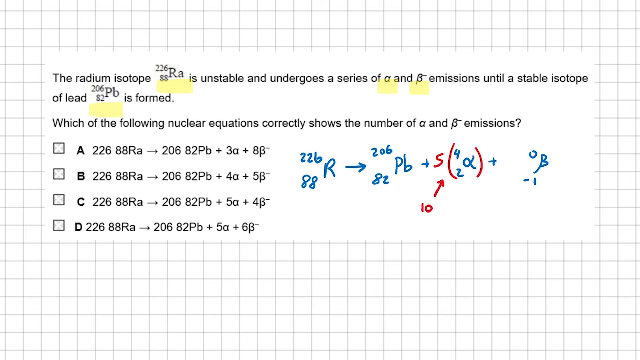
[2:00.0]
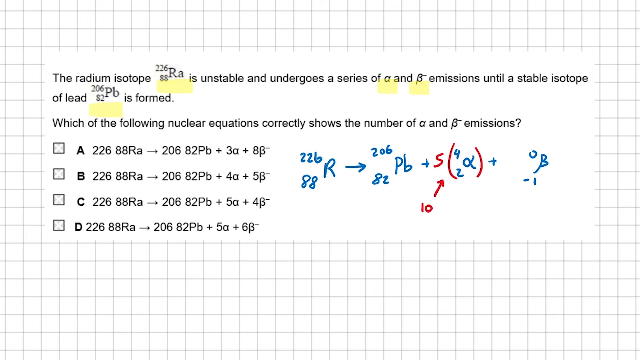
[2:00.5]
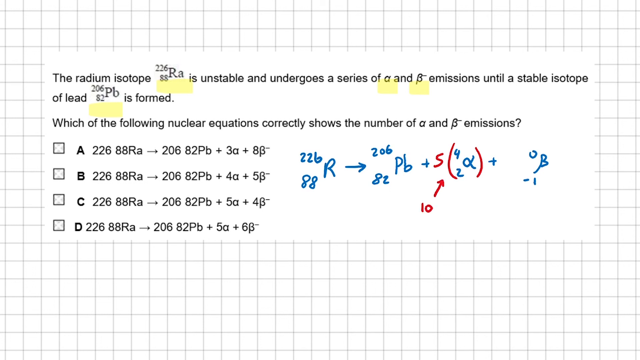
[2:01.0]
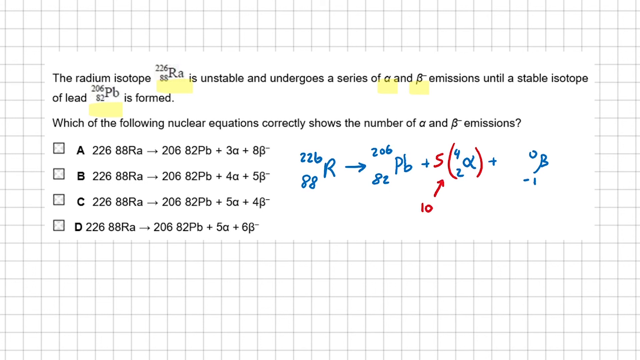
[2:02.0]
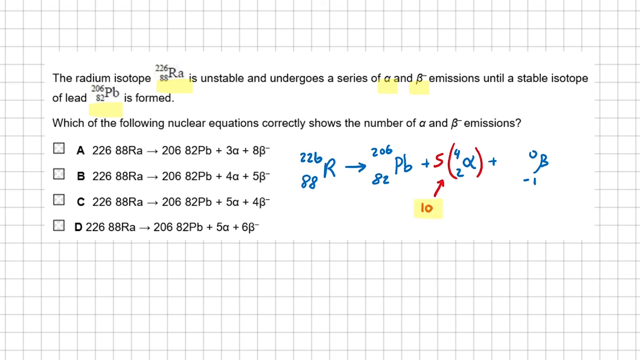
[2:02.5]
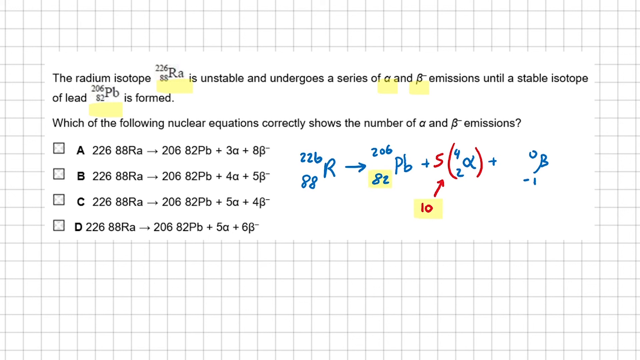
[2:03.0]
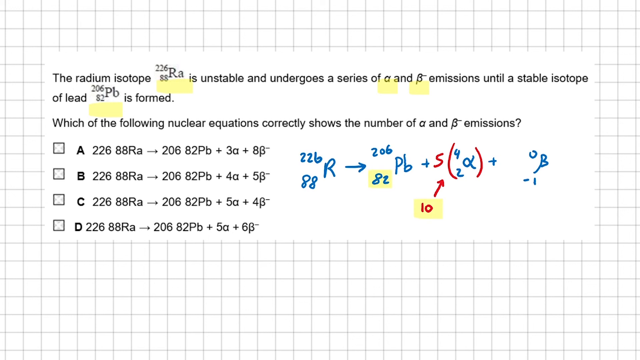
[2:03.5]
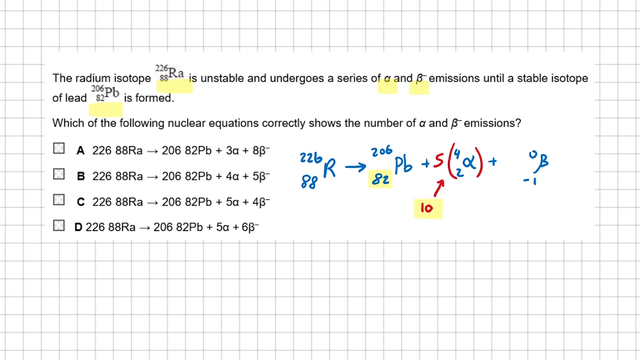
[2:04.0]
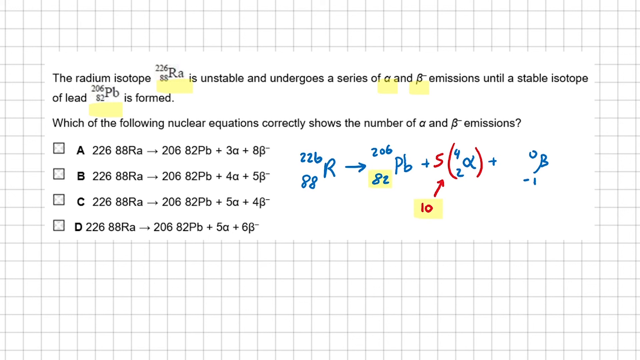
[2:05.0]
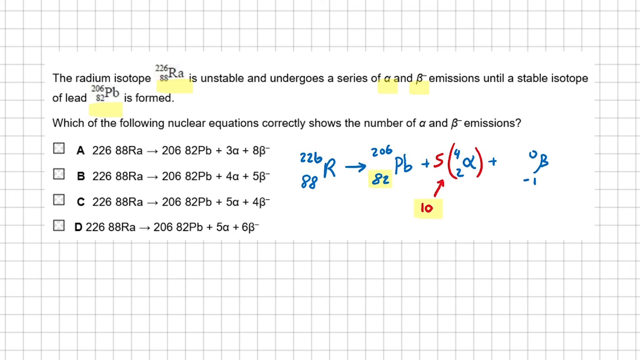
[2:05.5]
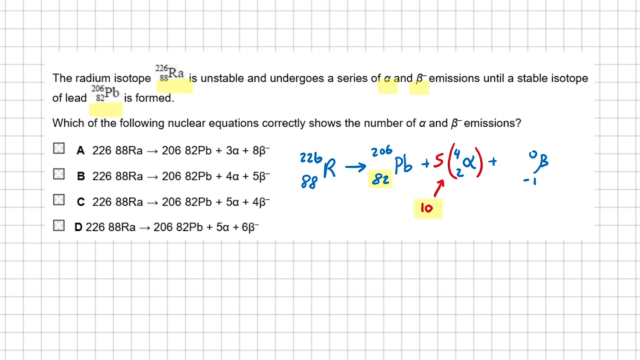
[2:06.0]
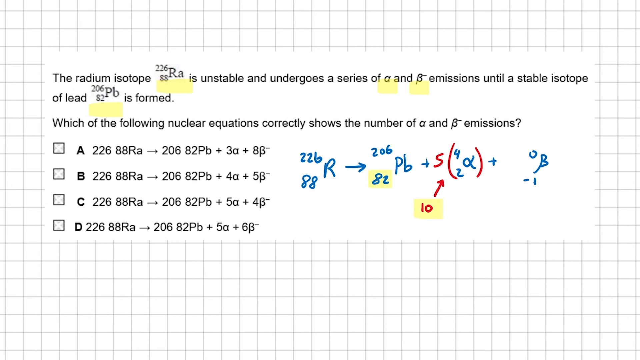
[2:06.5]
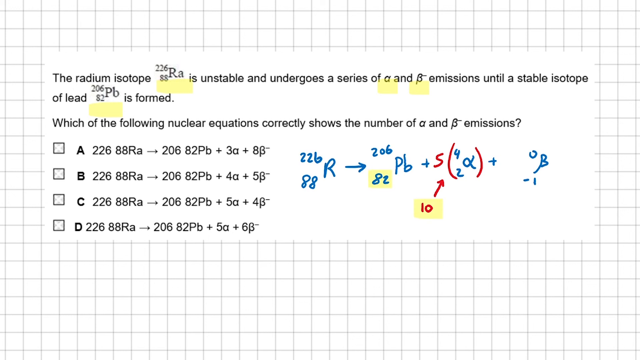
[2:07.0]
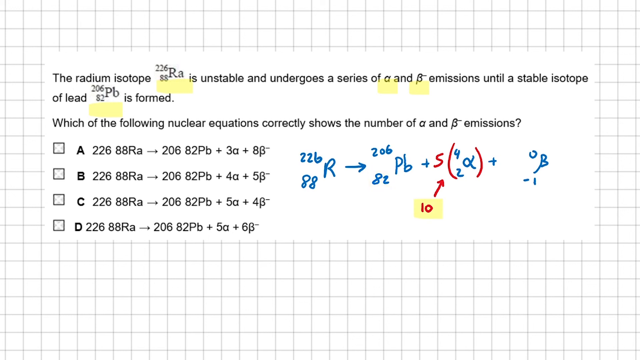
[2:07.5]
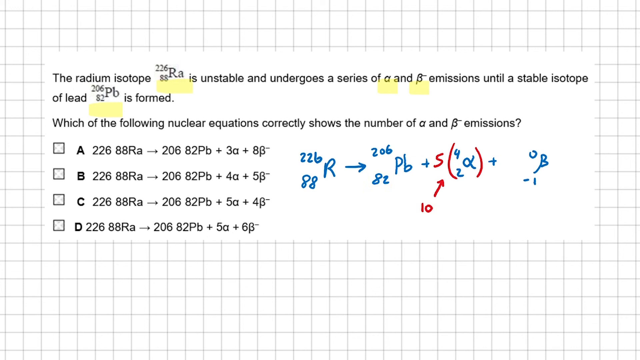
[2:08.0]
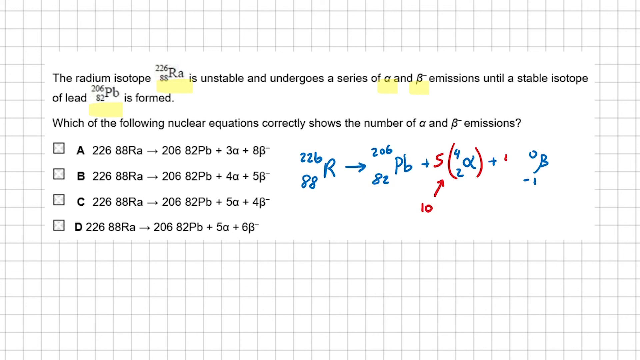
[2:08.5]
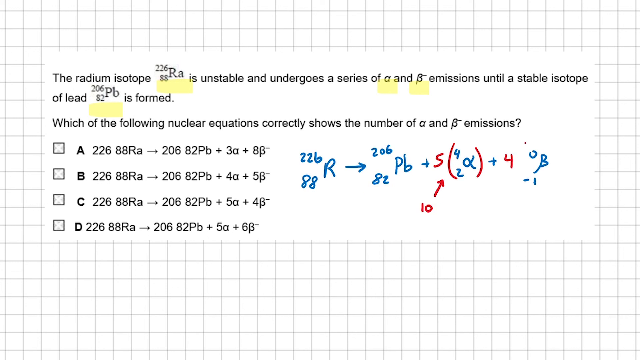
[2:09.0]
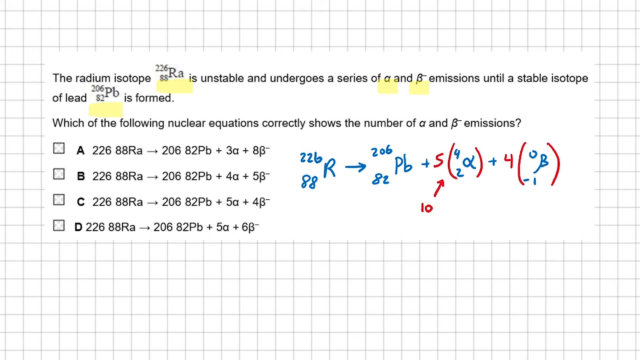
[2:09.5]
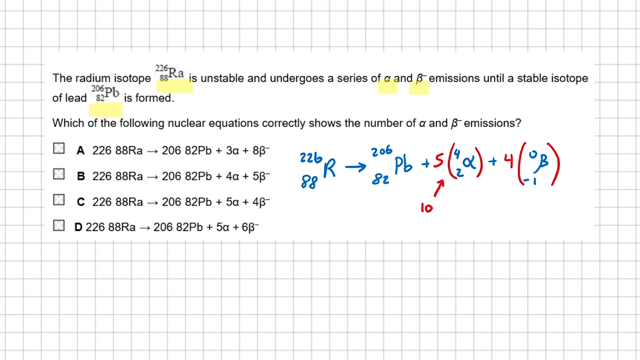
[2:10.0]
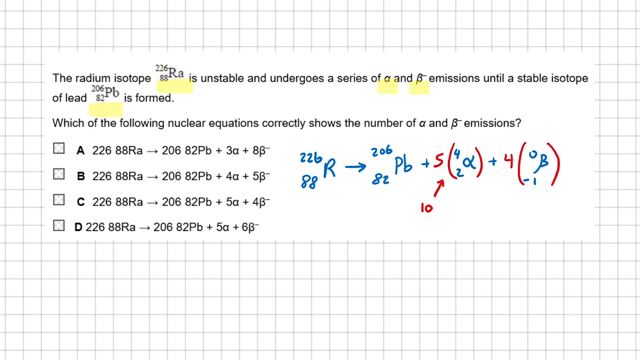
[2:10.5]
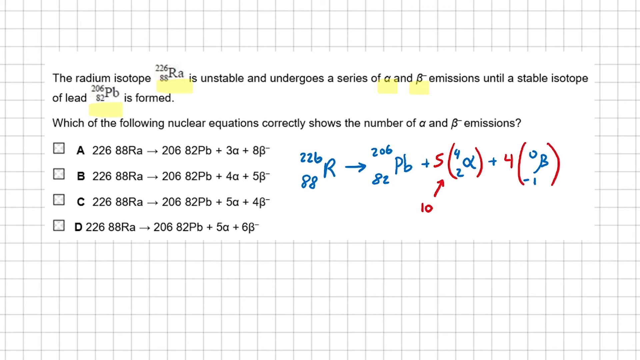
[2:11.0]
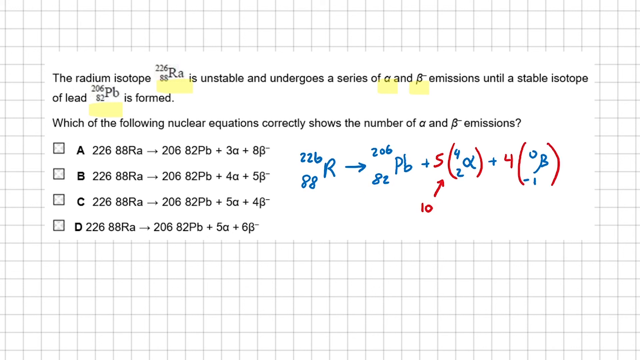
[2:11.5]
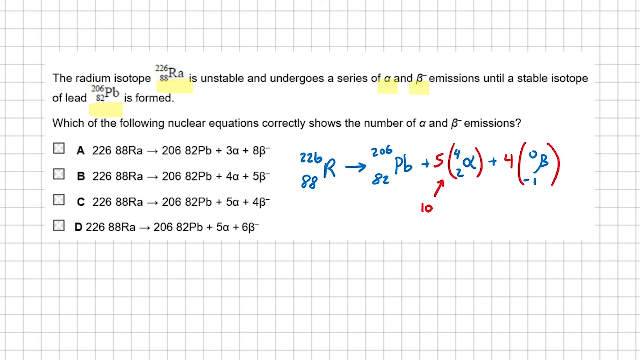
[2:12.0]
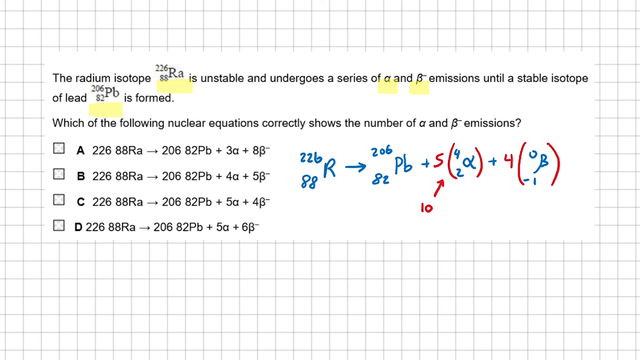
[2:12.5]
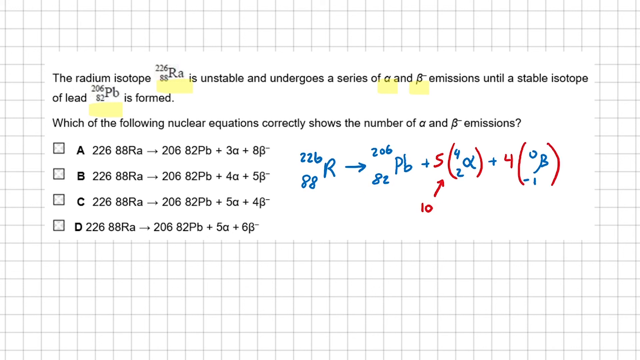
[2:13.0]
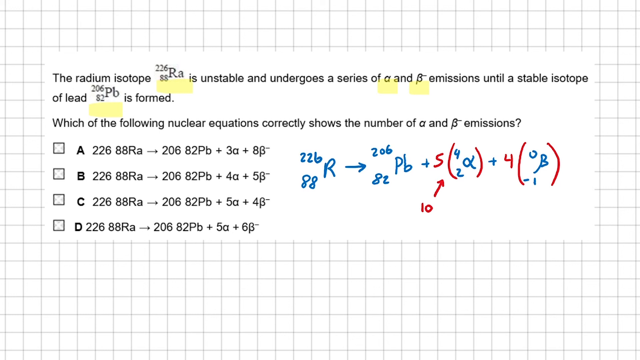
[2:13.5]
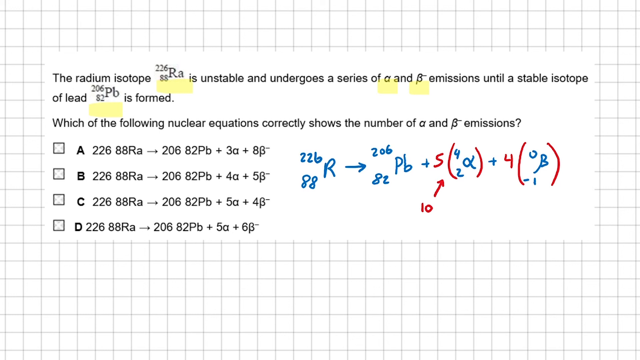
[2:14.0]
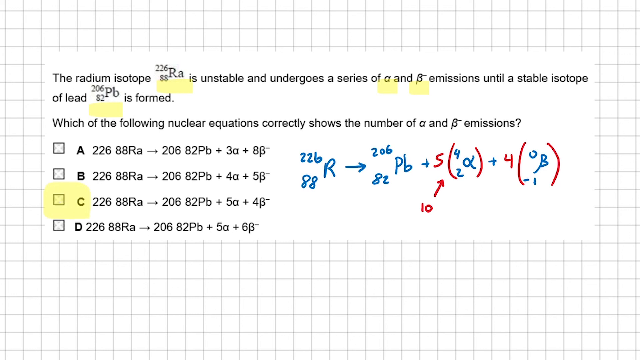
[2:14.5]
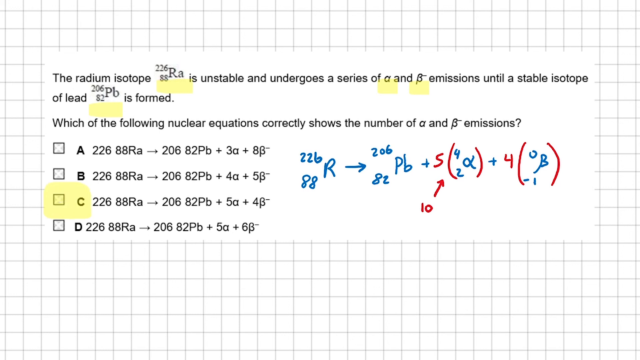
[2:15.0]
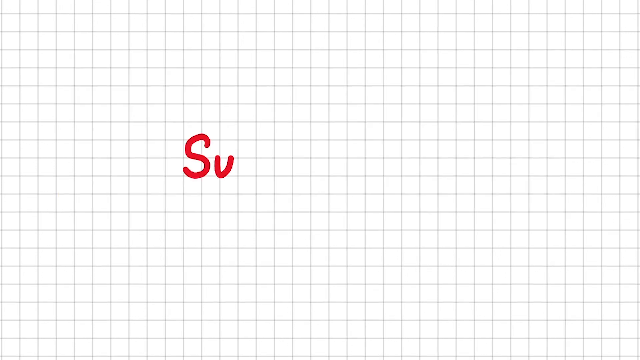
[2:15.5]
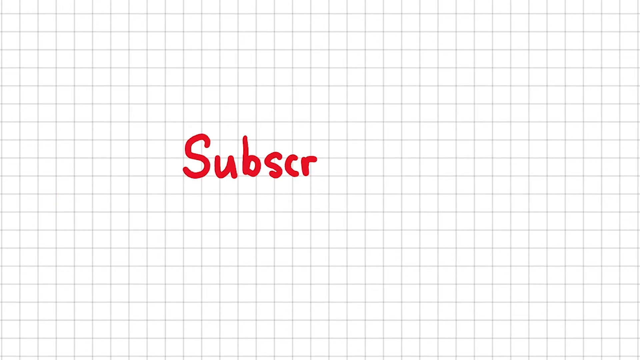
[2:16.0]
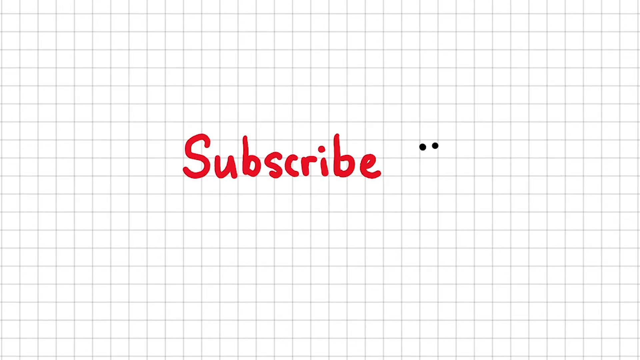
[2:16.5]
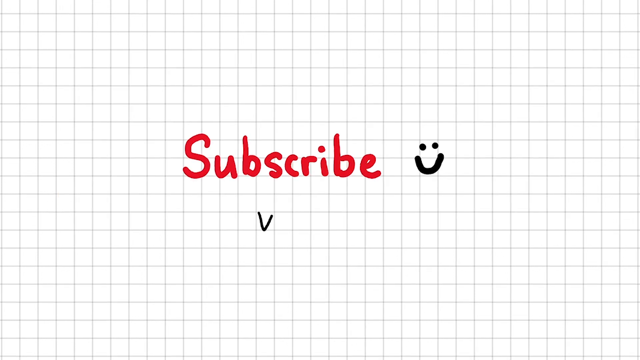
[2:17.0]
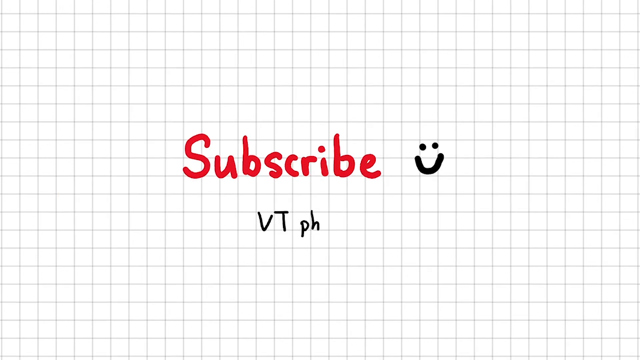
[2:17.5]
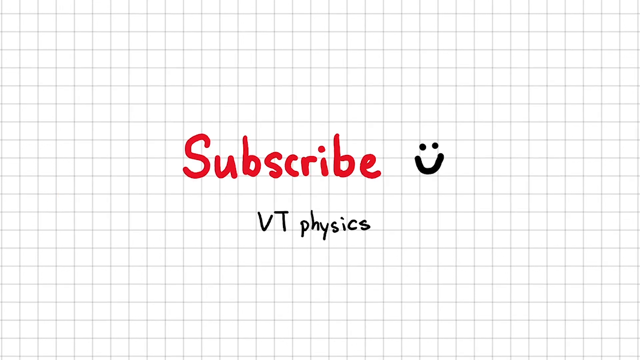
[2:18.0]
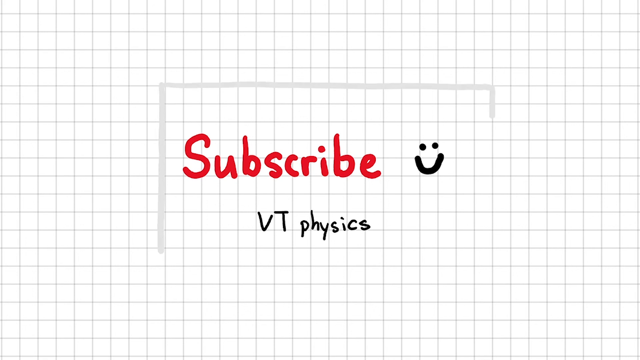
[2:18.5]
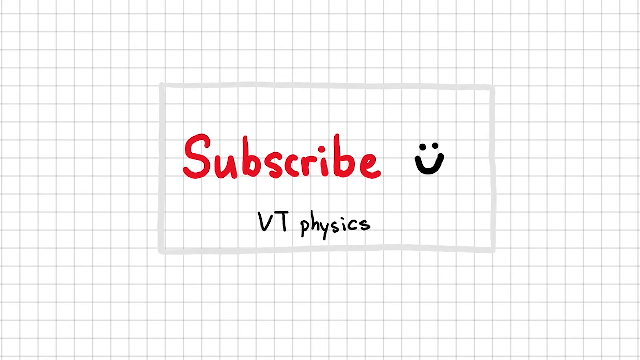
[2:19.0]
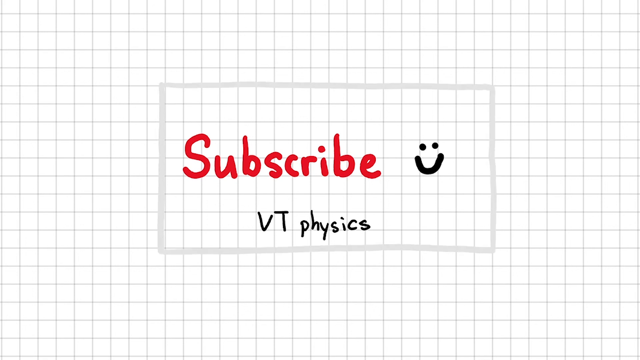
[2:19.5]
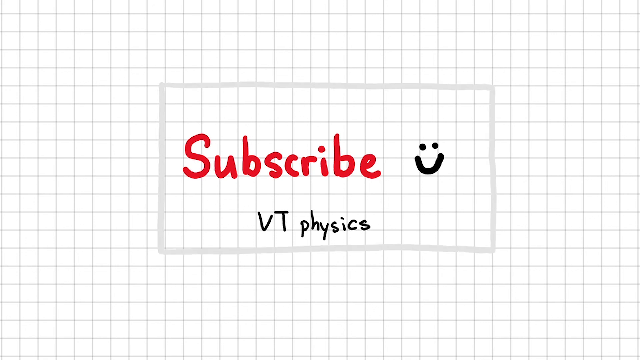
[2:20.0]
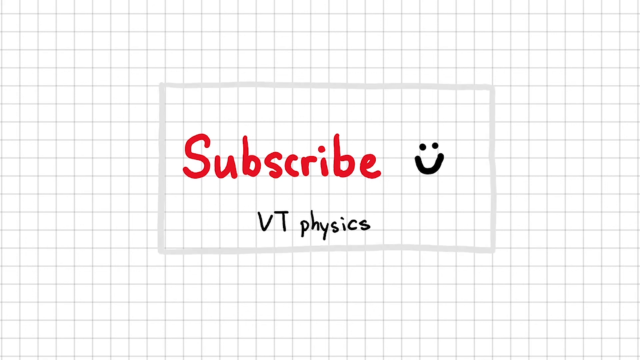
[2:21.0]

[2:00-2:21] Over a black and white grid pattern on a computer screen is the question about unstable radium isotopes that undergo a series of emissions until a stable isotope of lead is formed, asking which of the four options correctly shows the emissions. An equation in blue and red marker is in progress, and parts of the question are underlined with yellow highlighter. Other parts of the written equation are highlighted and the highlights are then removed, as if to indicate their importance. The equation is finished, and option C is highlighted as the correct answer. No person is ever seen; everything is done on the computer. The science problem then disappears and text comes up reading "subscribe" with a smiley face and the name VT Physics.